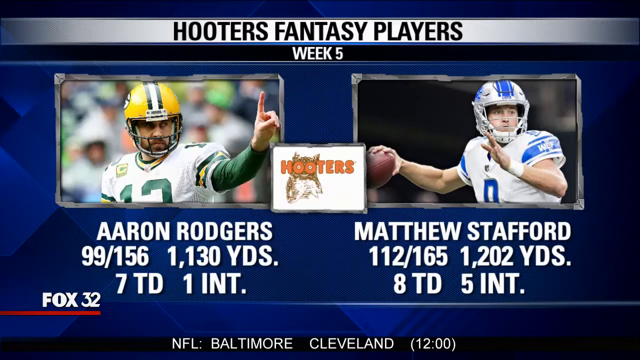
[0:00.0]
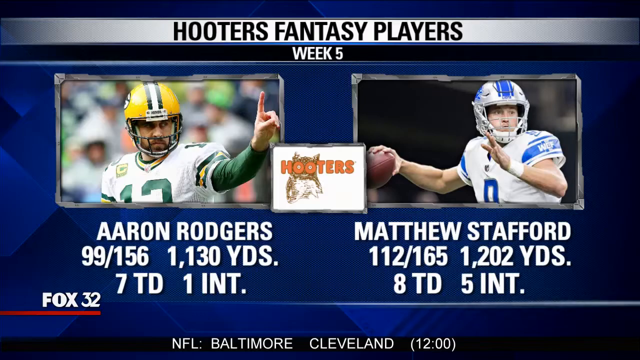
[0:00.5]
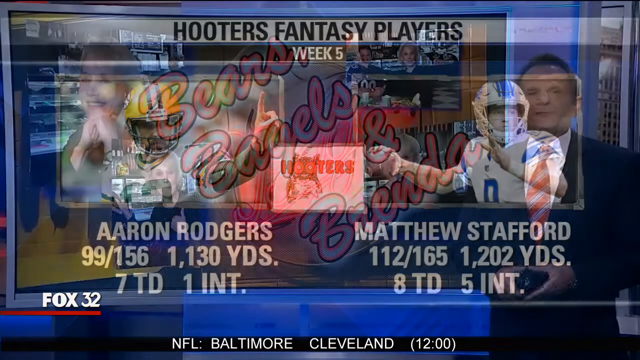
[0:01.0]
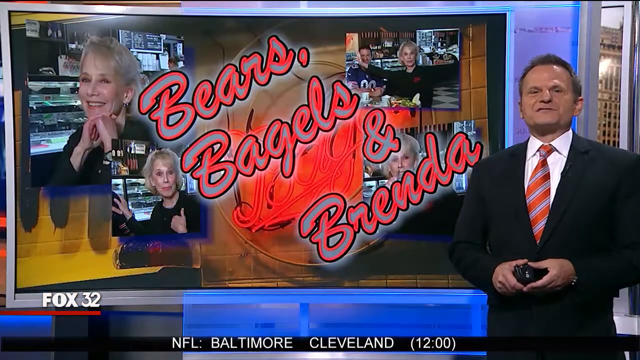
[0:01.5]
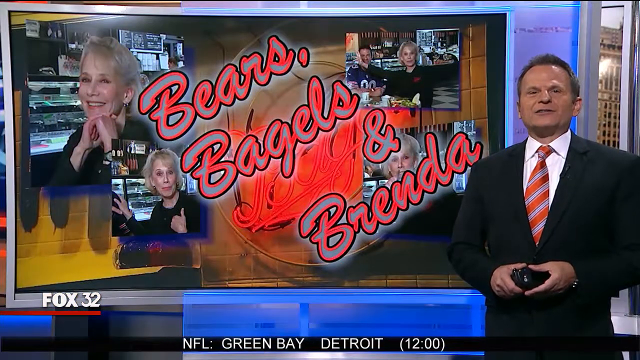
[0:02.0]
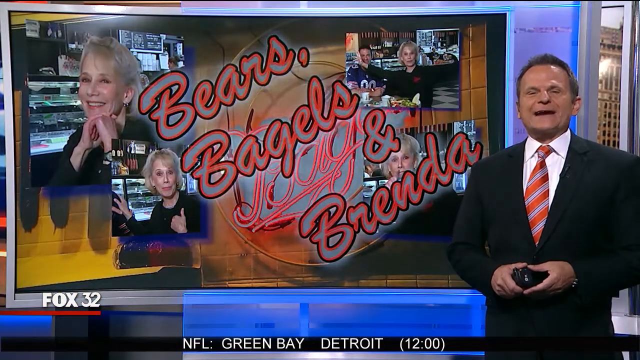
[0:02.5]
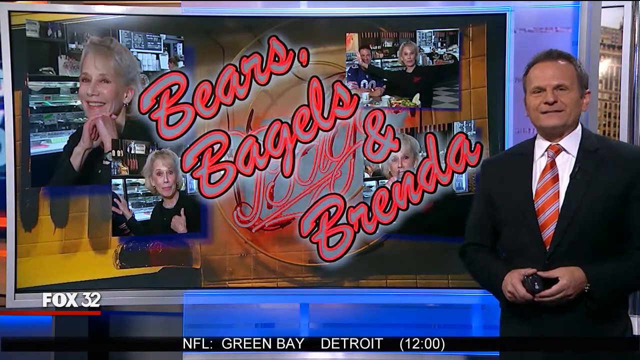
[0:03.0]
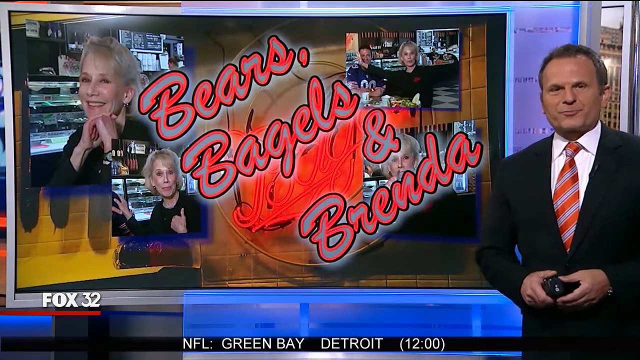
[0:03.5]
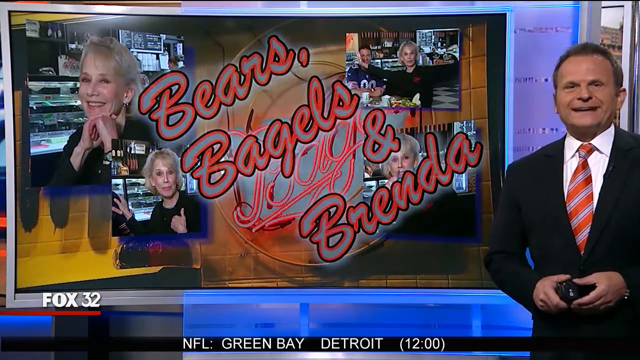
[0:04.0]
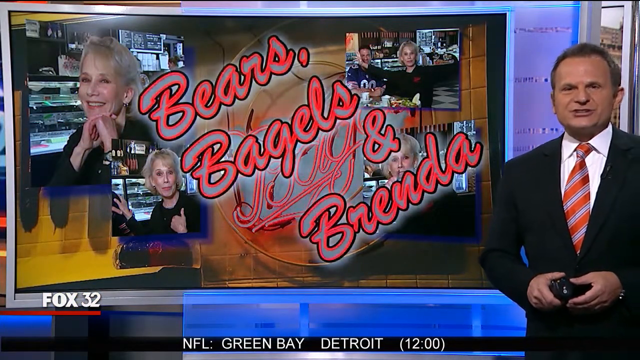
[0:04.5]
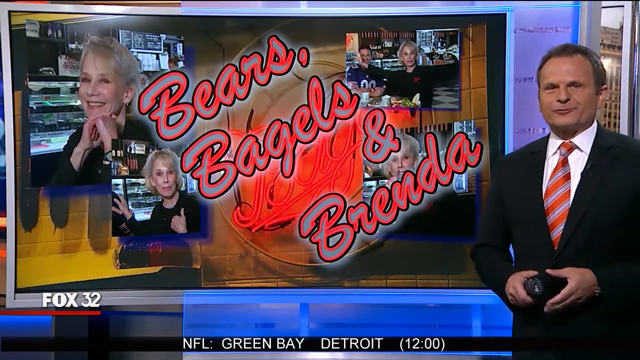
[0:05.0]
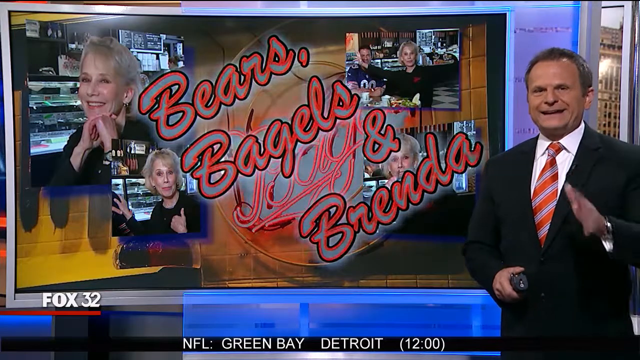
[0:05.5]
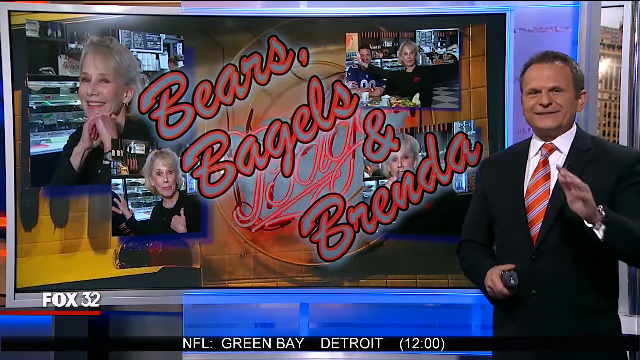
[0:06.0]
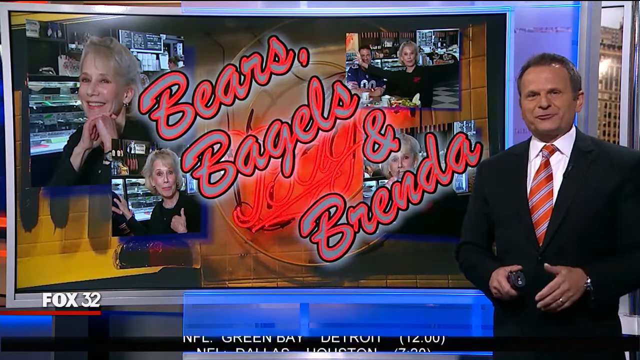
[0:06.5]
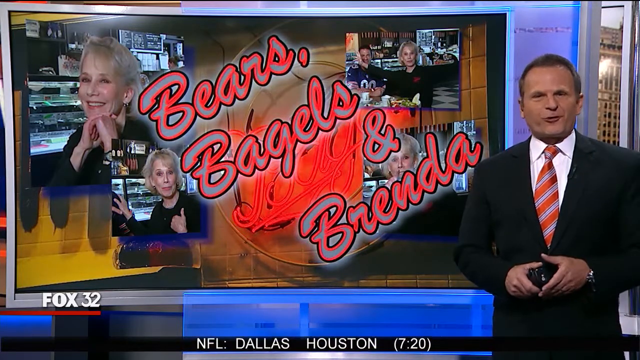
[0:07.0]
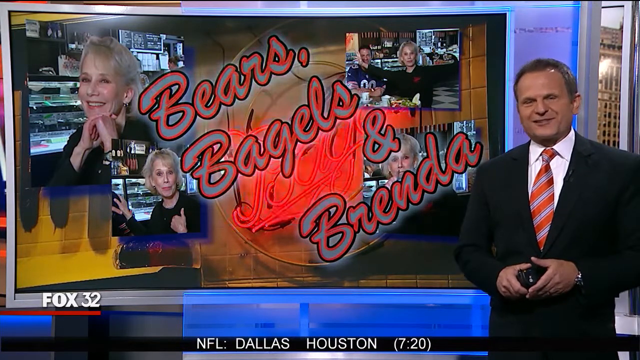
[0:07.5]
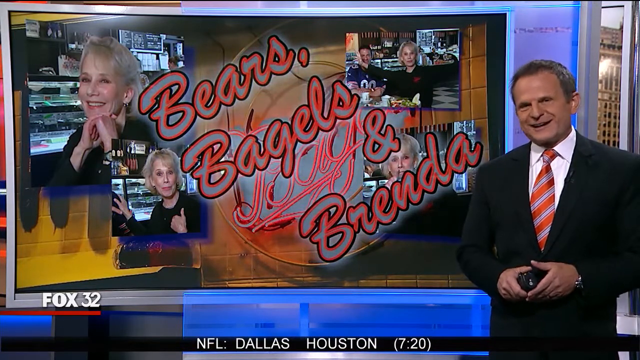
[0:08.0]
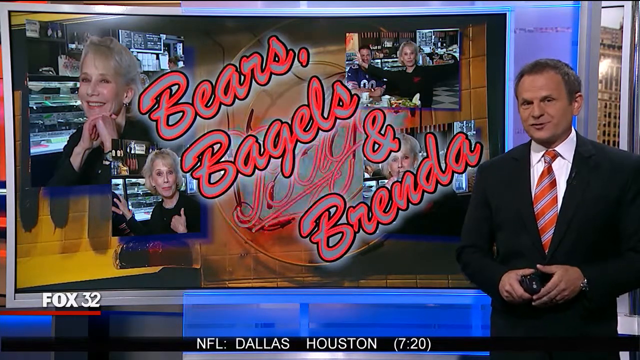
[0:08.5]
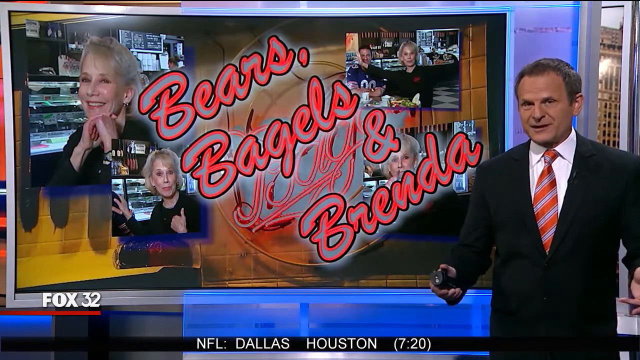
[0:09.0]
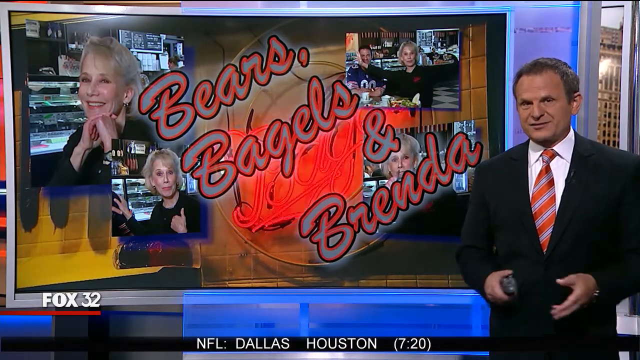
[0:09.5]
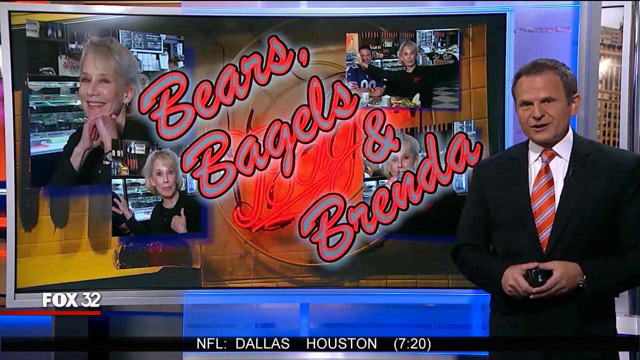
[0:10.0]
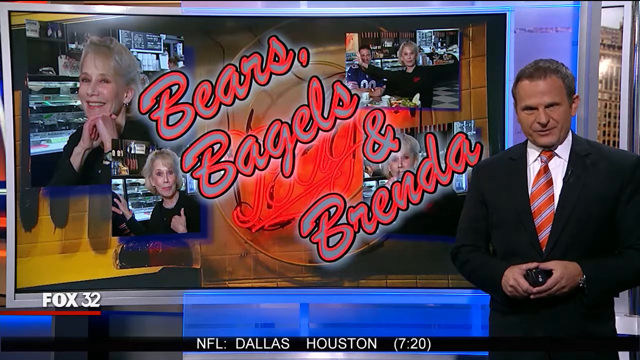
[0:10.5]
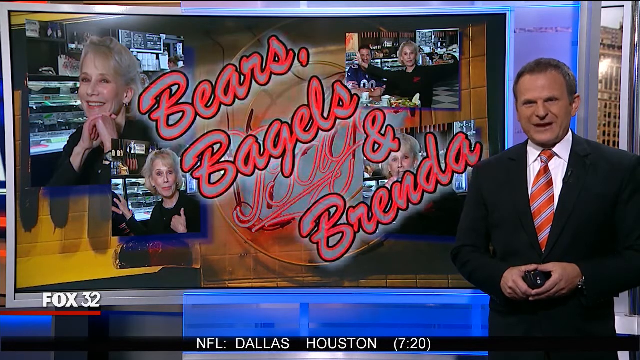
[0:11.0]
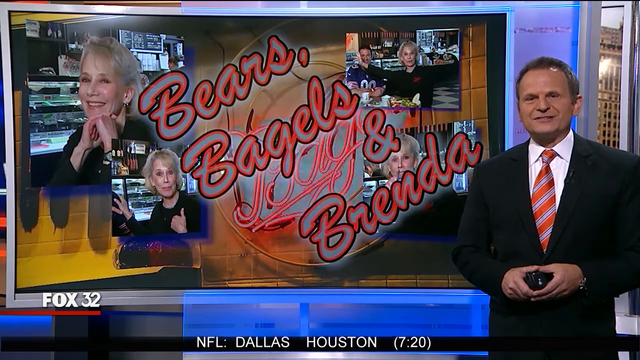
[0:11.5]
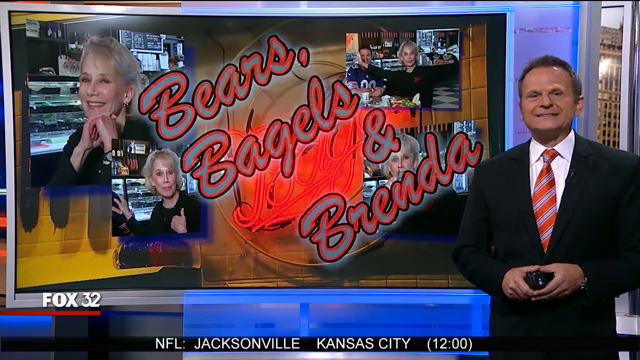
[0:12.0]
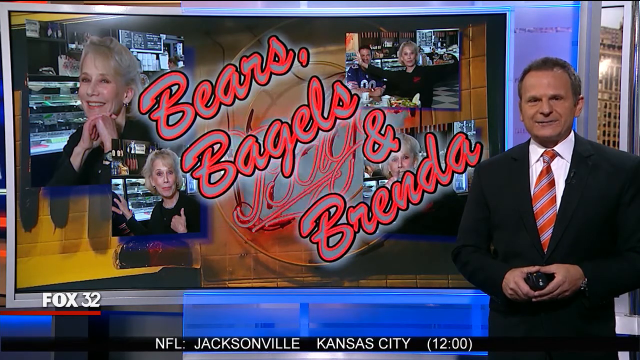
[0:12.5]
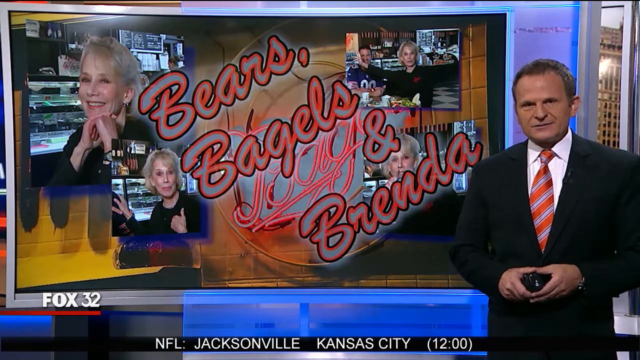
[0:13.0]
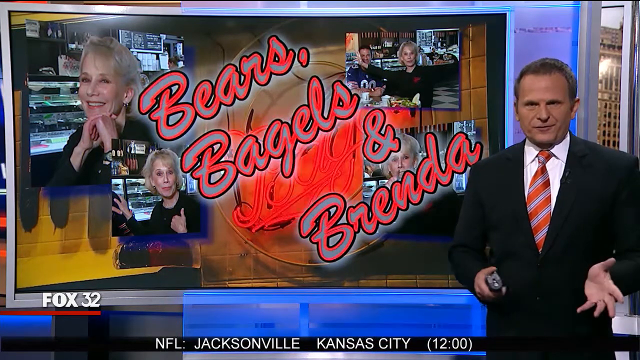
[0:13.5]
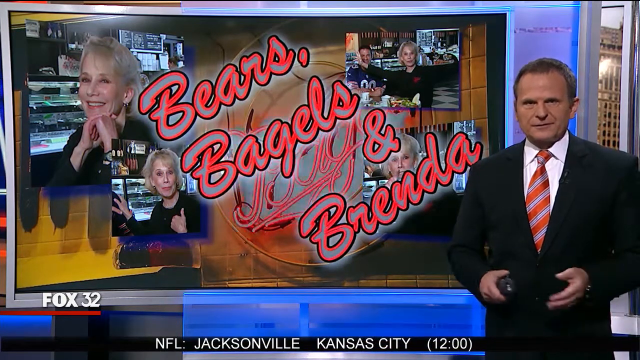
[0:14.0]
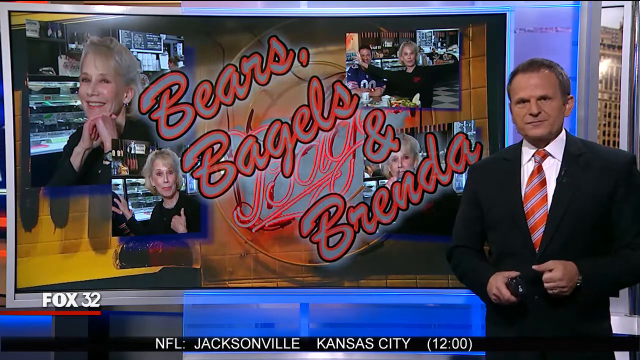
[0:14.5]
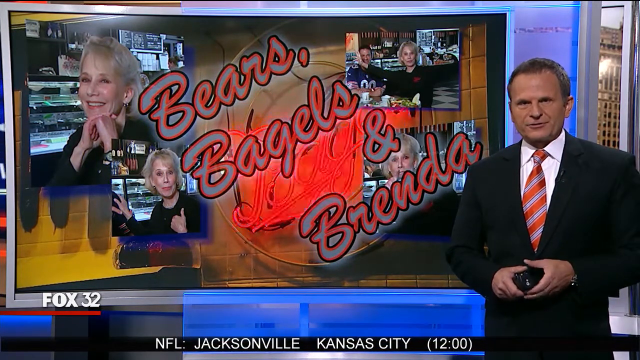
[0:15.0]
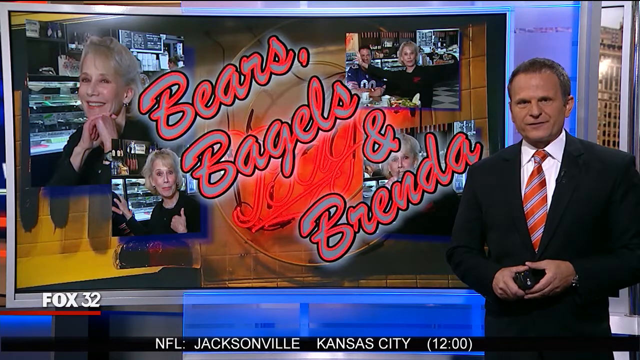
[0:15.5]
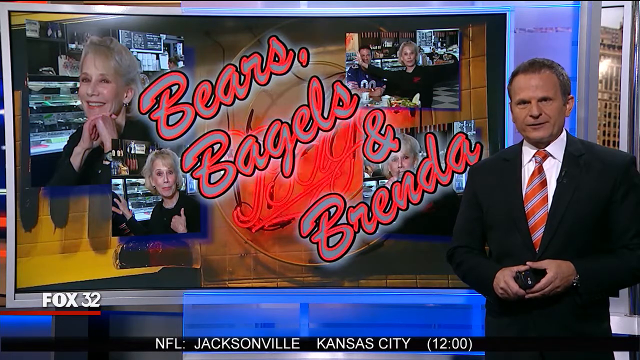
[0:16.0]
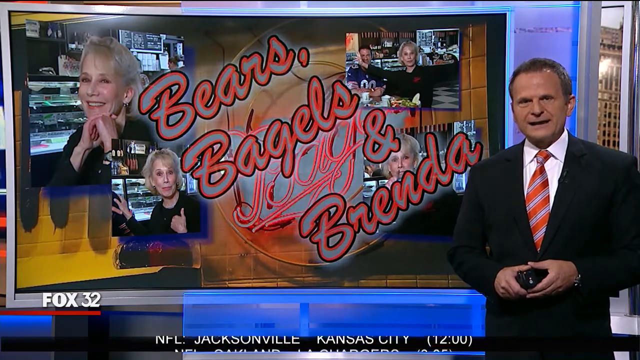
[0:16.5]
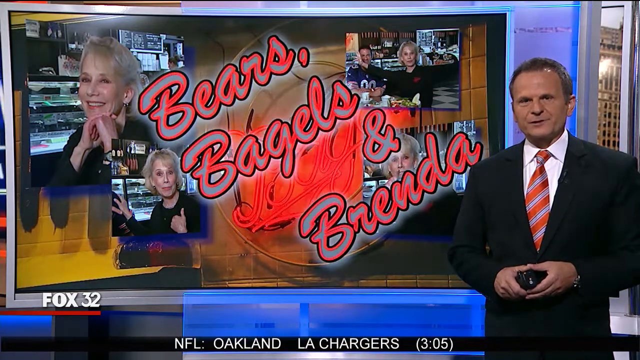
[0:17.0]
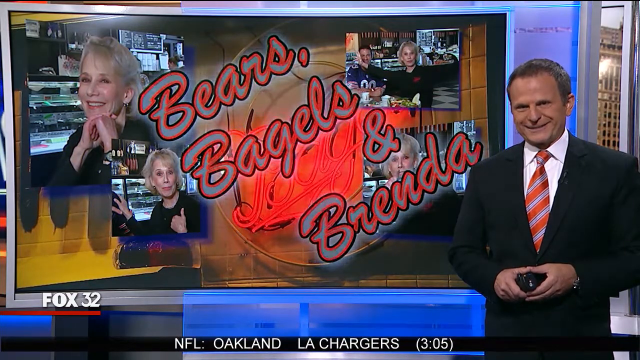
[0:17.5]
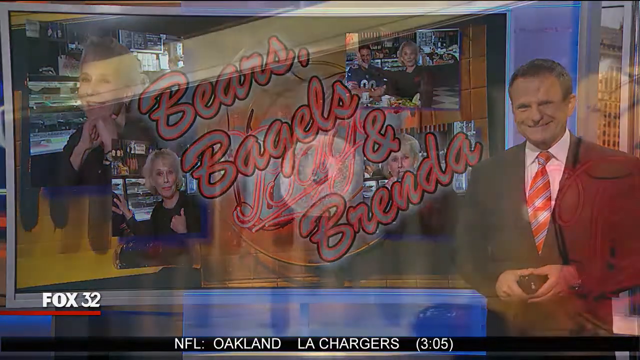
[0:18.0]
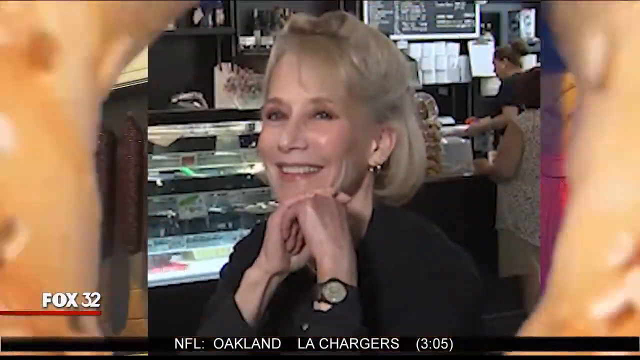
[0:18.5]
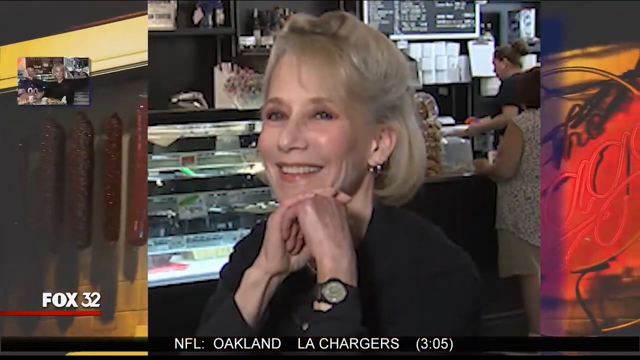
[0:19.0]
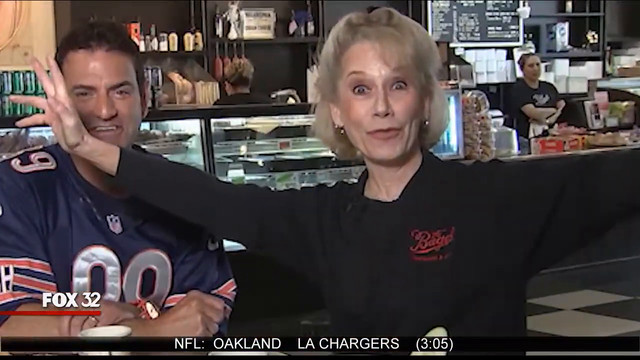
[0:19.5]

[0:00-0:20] An older man appears, and the words "Bears, Bagels and Brenda" show in bright, almost neon flashing lights, apparently the name of a restaurant. A picture of a woman appears, then two pictures of the same person, then three pictures of the same woman alongside a man in a blue football jersey. Next, two pictures of two NFL players appear side by side, with "Hooters Fantasy Players, week five" written on top and the Hooters logo in the middle between the two pictures. The player on the left, Aaron Rodgers, wears a yellow helmet. The player on the right, Matthew Stafford, wears a gray and blue helmet with a white and blue jersey. The channel is Fox 32.